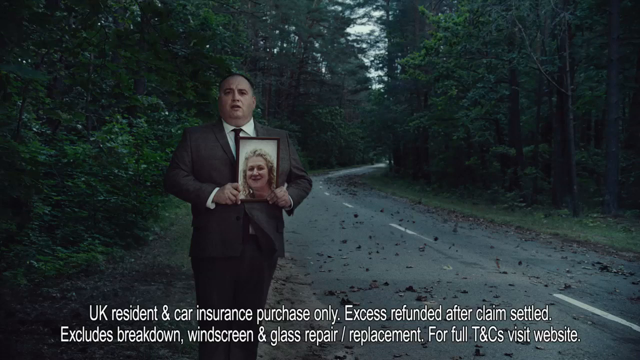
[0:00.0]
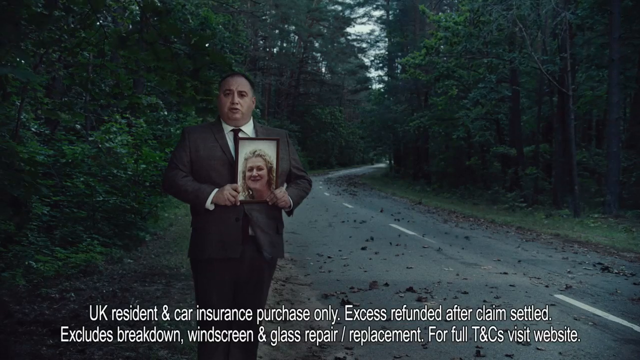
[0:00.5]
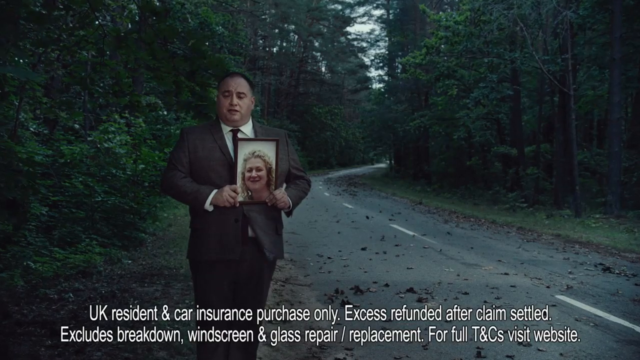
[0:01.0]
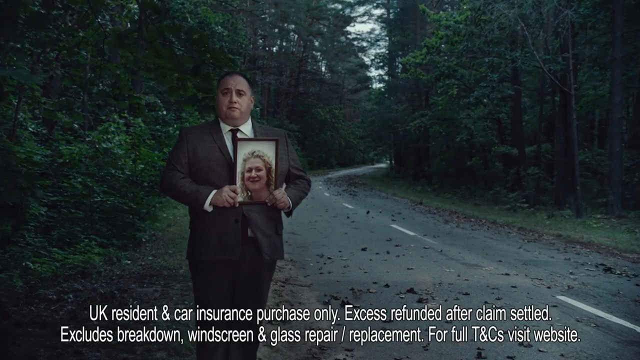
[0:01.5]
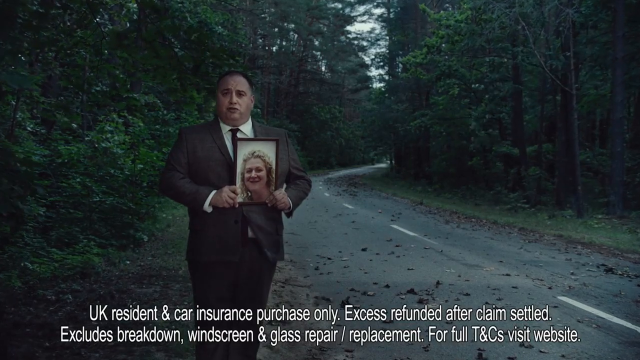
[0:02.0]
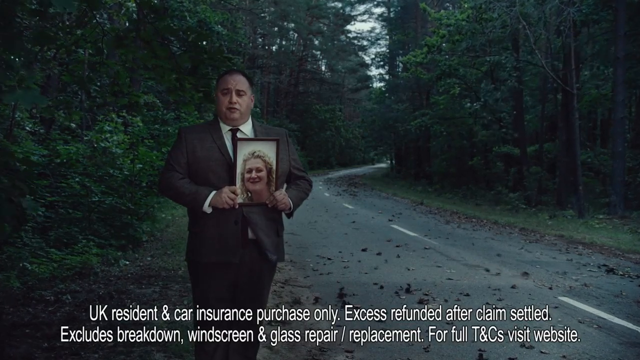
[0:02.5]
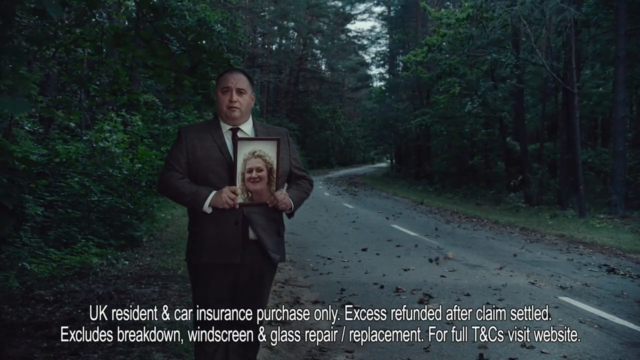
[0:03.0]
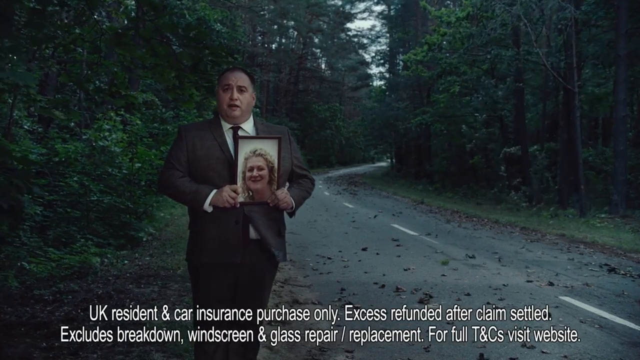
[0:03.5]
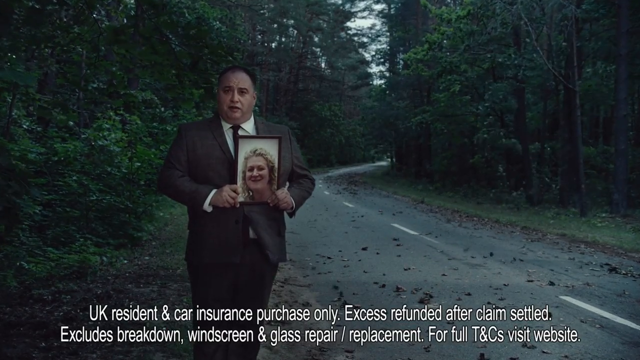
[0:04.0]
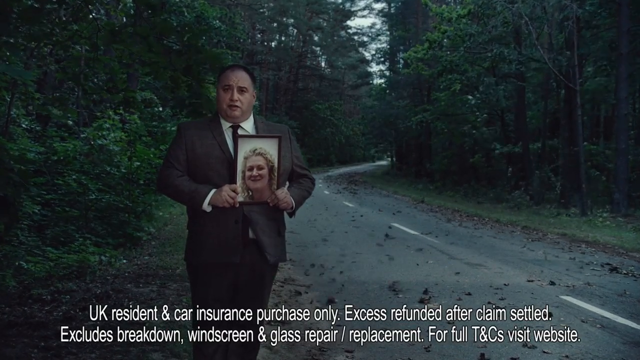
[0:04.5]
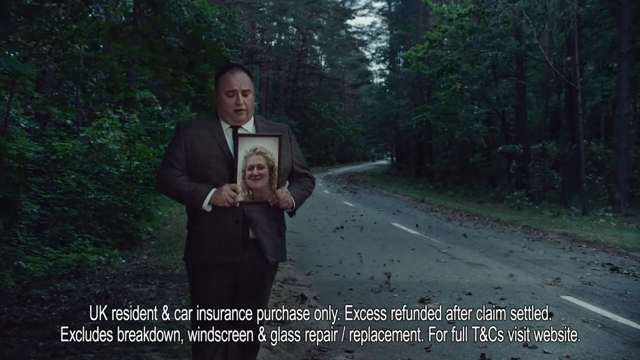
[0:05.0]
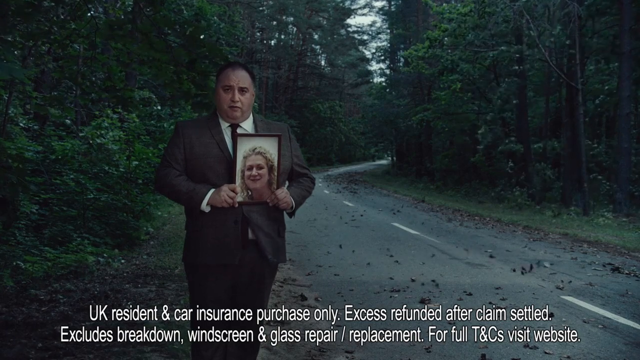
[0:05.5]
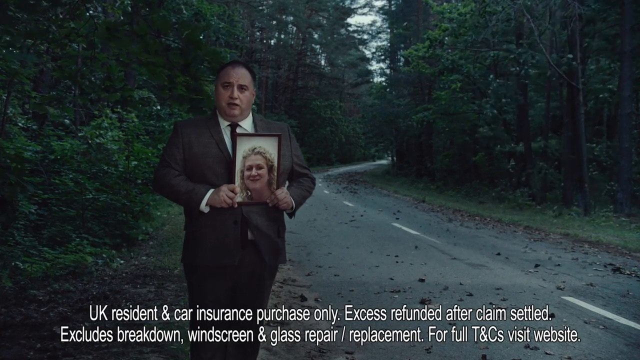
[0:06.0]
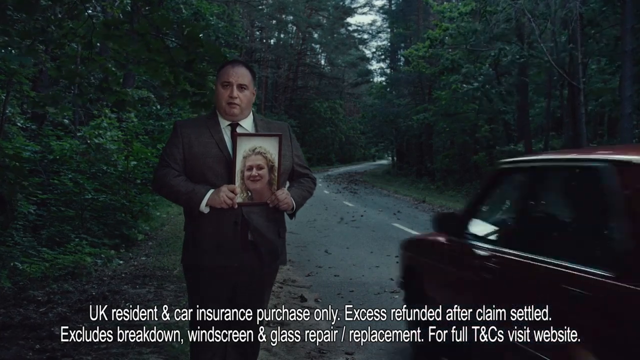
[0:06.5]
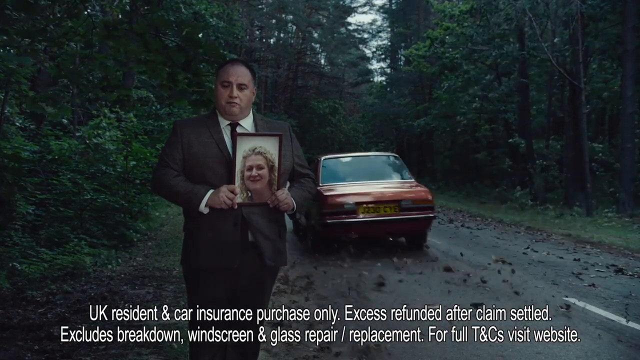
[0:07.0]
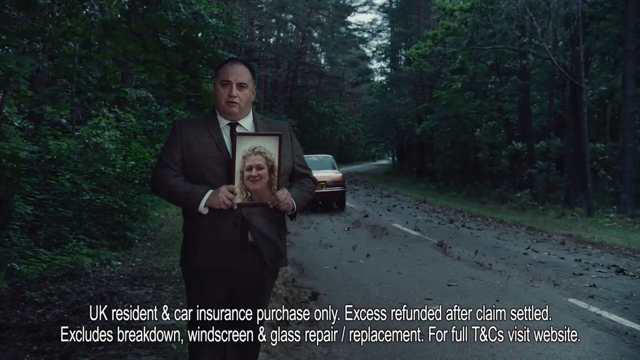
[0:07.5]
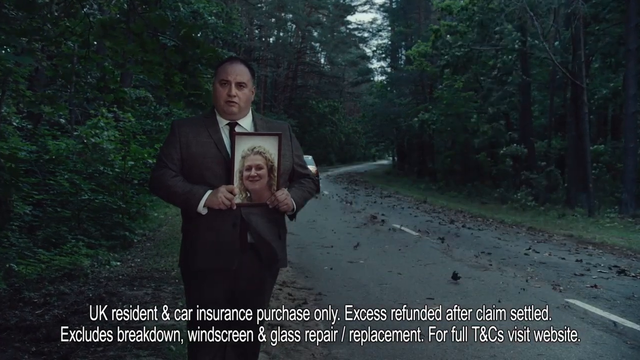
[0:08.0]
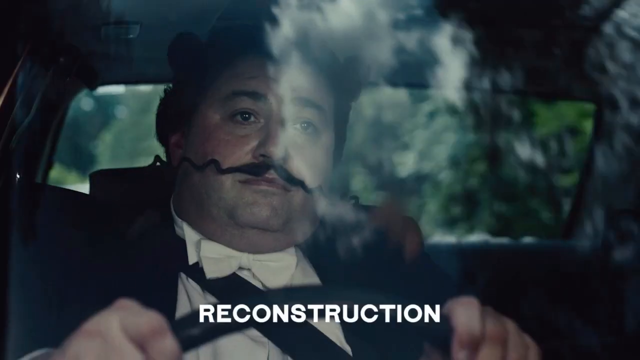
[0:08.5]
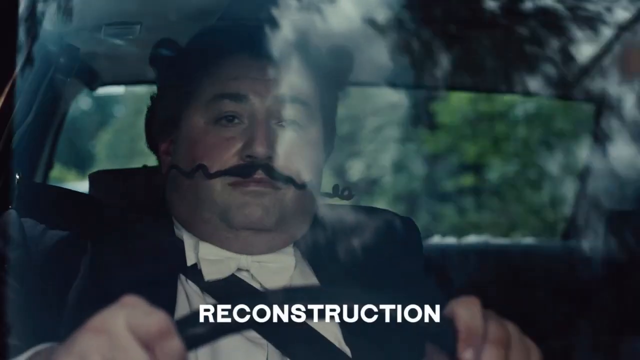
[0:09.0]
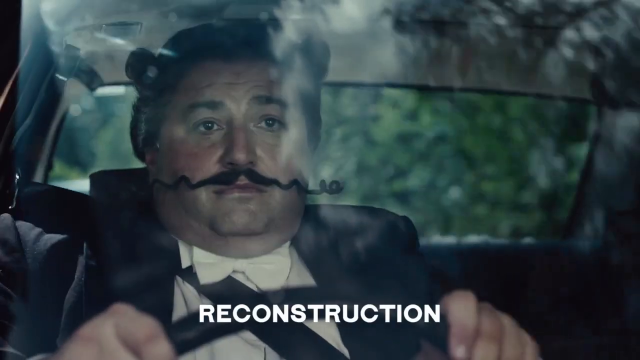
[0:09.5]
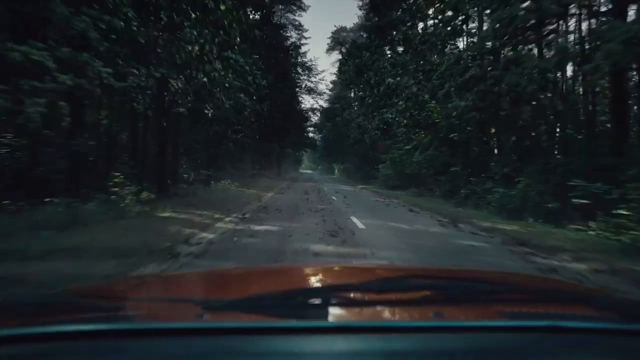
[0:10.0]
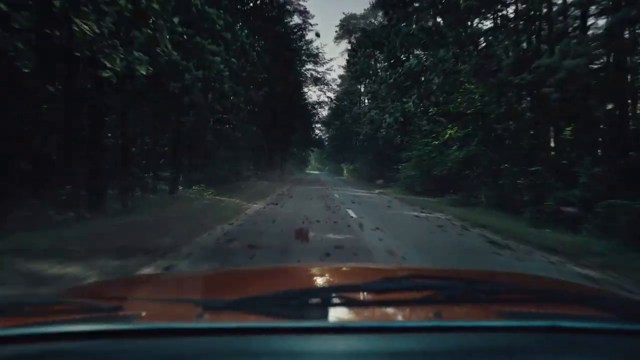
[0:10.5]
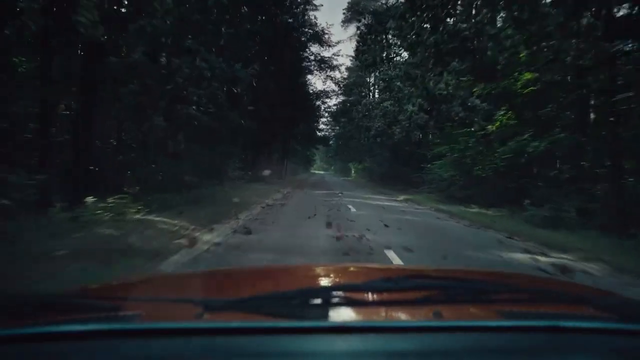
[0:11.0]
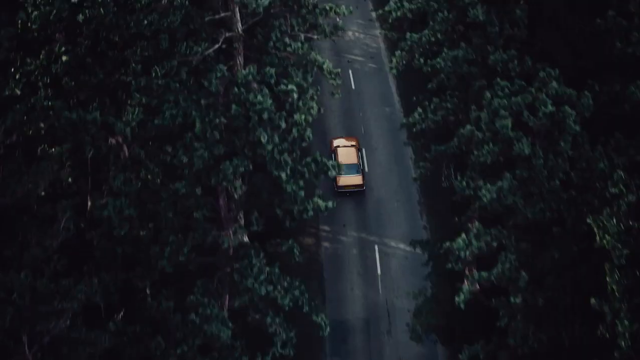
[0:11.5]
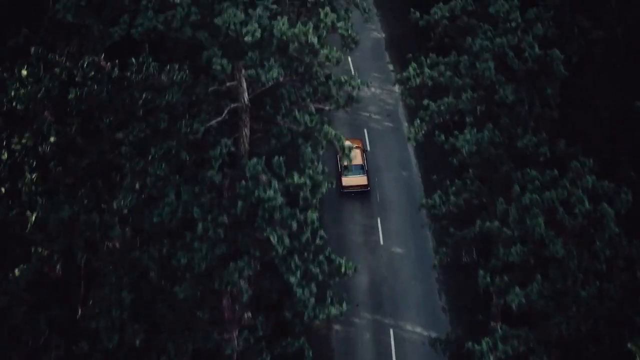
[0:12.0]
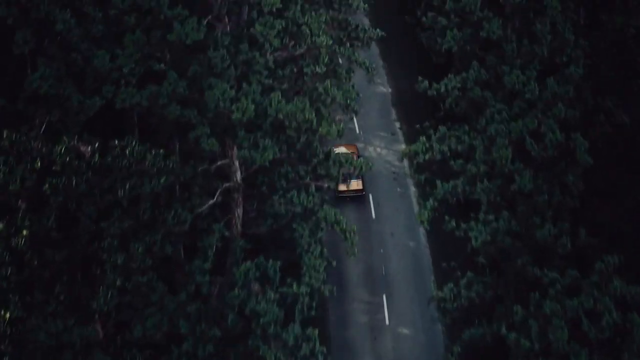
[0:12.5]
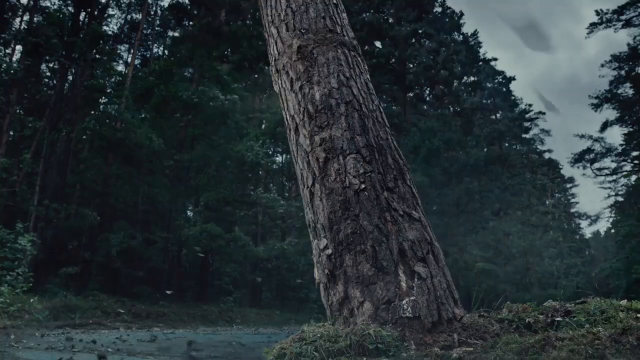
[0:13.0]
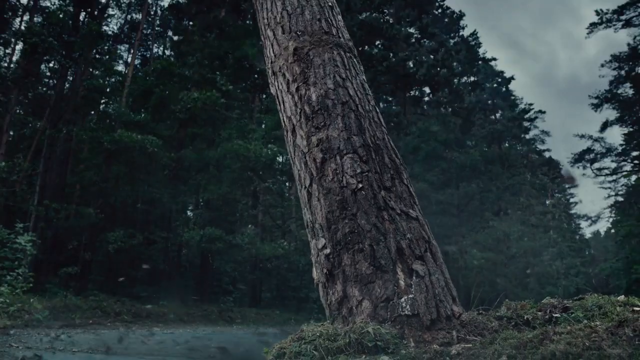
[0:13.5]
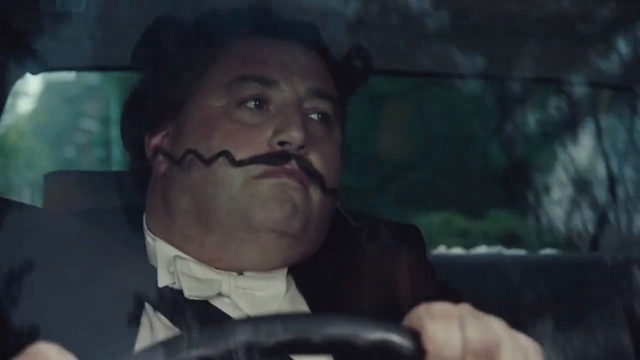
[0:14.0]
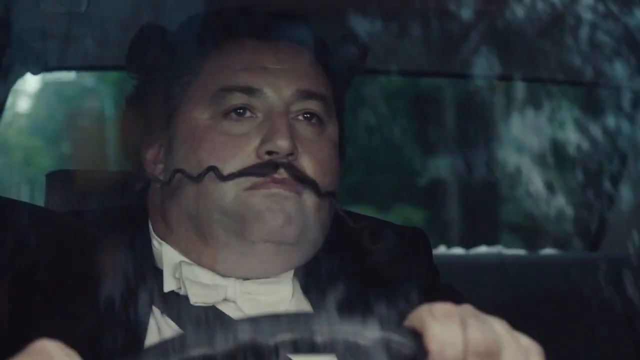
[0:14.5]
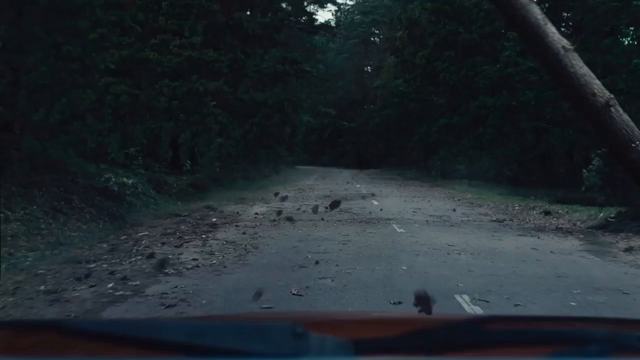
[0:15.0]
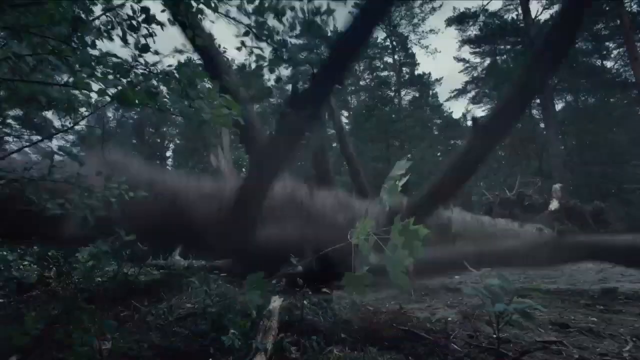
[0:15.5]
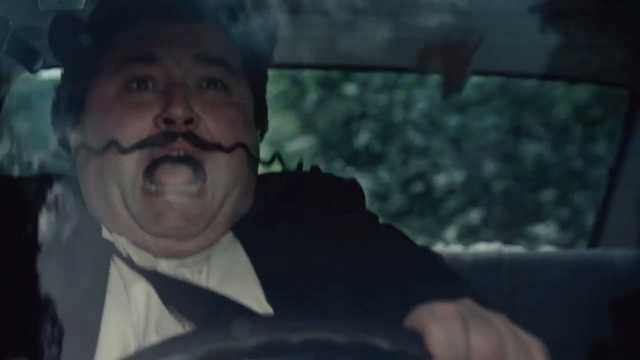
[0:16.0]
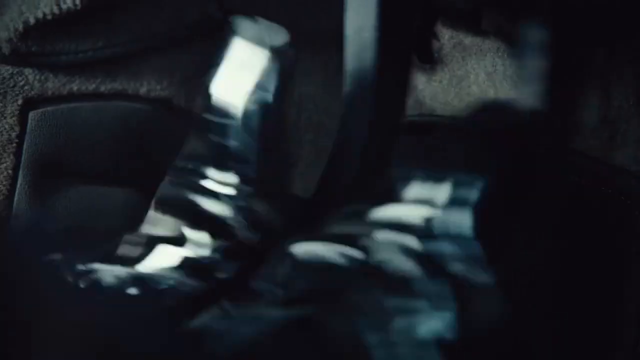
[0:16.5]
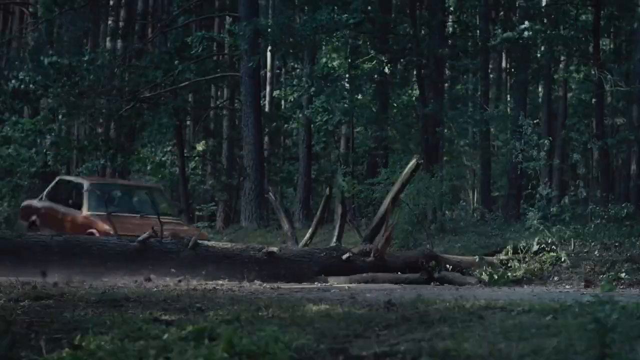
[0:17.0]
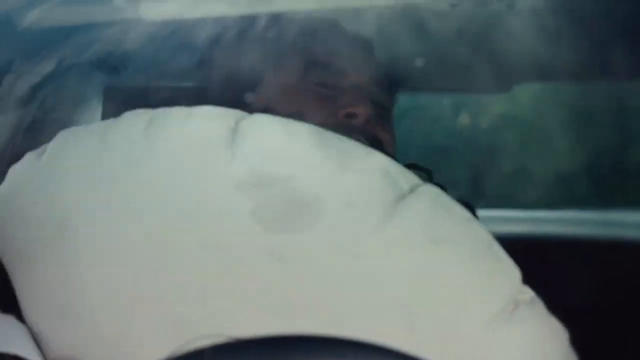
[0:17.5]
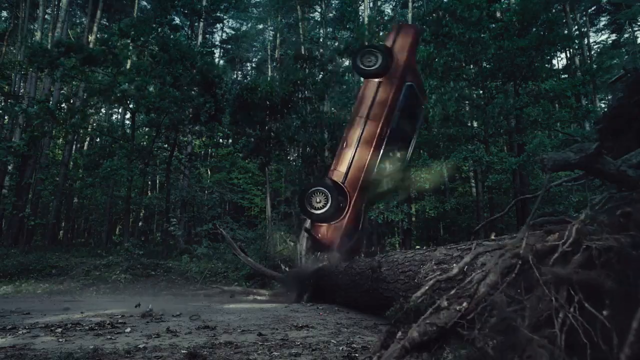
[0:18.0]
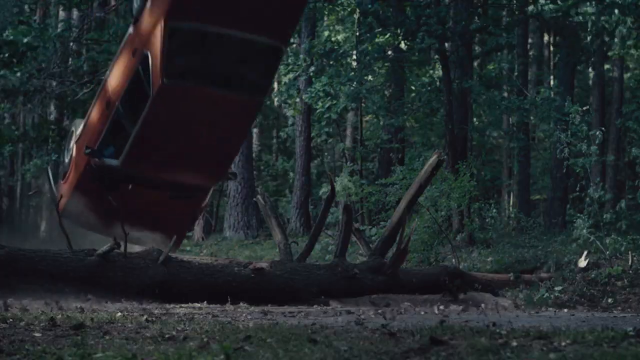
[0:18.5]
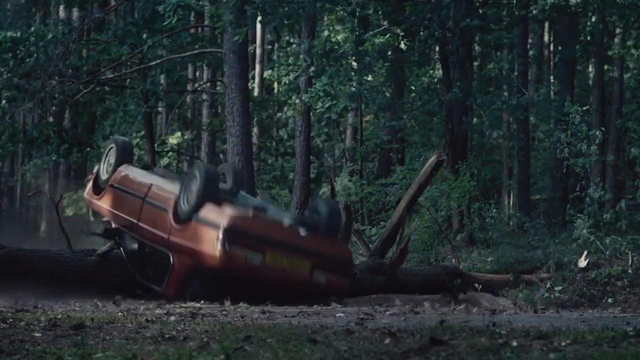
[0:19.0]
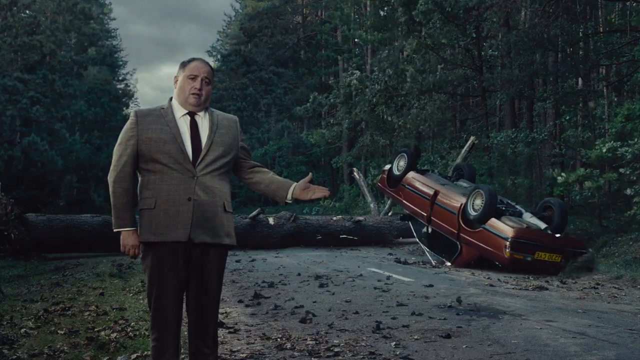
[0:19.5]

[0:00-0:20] A man in a suit and tie stands next to a roadway with a picture of a woman in a frame. He faces the camera and talks to it solemnly. In the background, leaves blow across the road, and the lighting suggests a serious, dark setting. The scene changes as a car drives by the speaking man, and an inside-the-vehicle shot shows a driver with a very large, comical mustache. The driver looks around as he drives, and the camera angle changes to an overhead view of the car driving through a wooded area. A quick shot shows a tipping tree, then it cuts back to the driver. He is looking through the windshield when he suddenly screams in surprise as the tree falls over the road in front of him. He slams on the brakes, but too late: the car hits the tree and flips over.